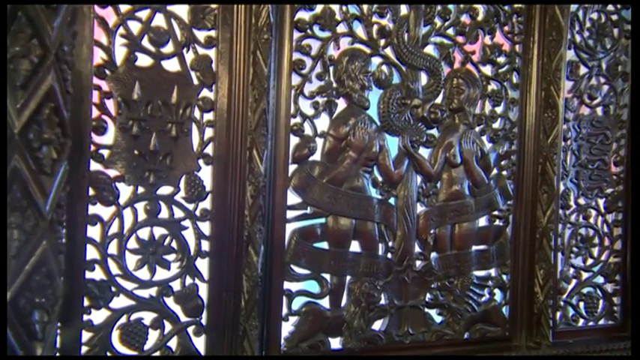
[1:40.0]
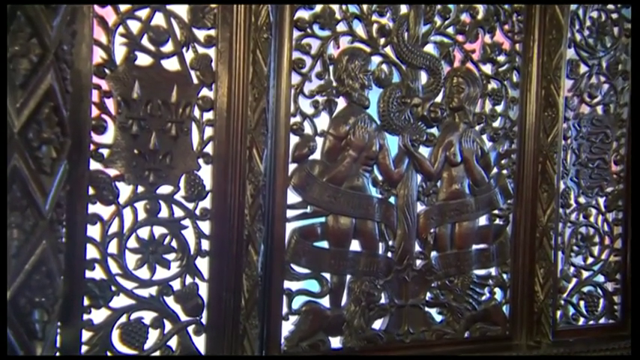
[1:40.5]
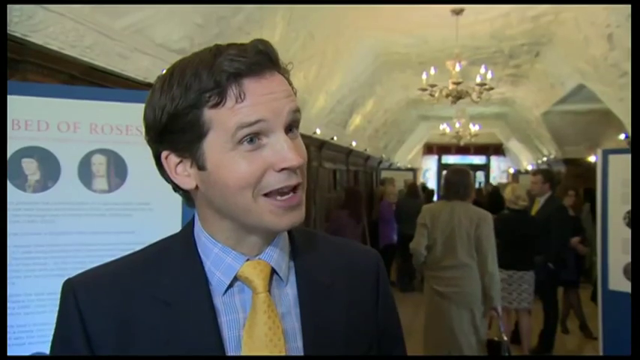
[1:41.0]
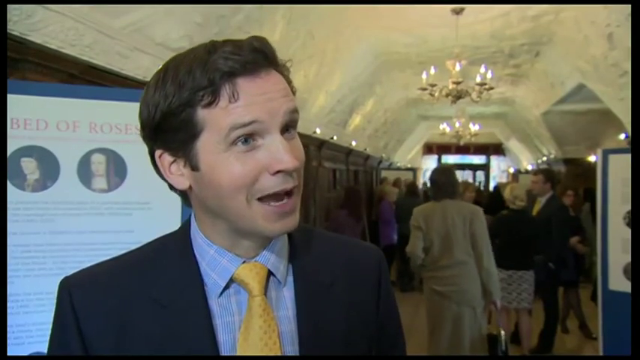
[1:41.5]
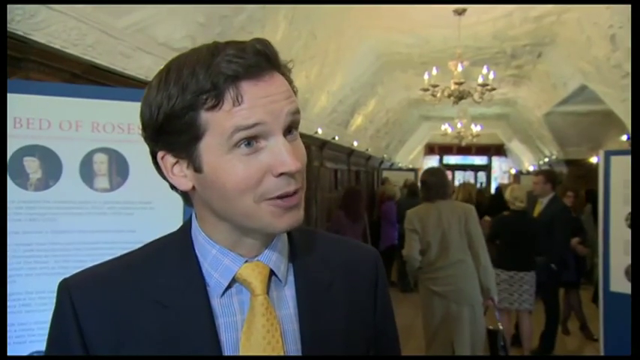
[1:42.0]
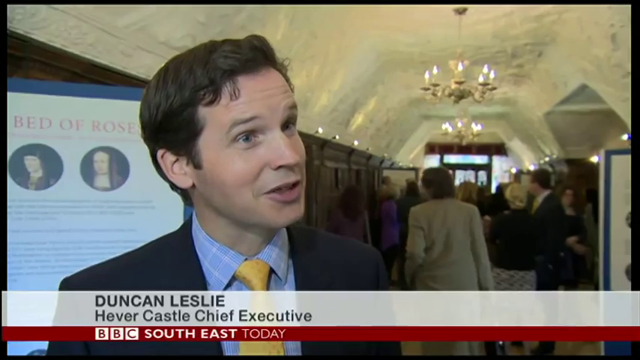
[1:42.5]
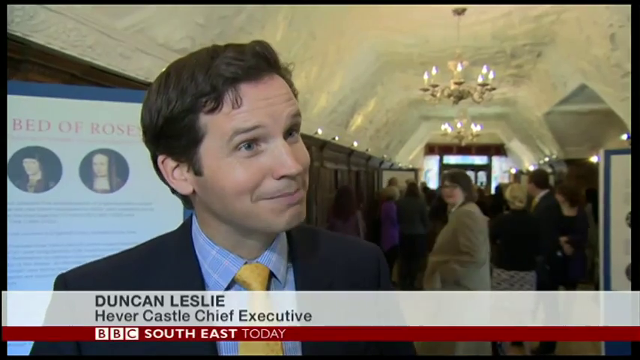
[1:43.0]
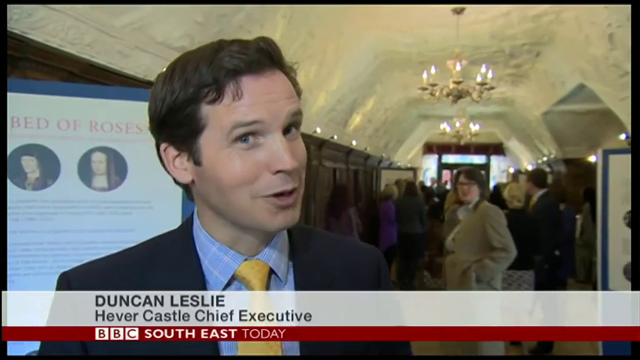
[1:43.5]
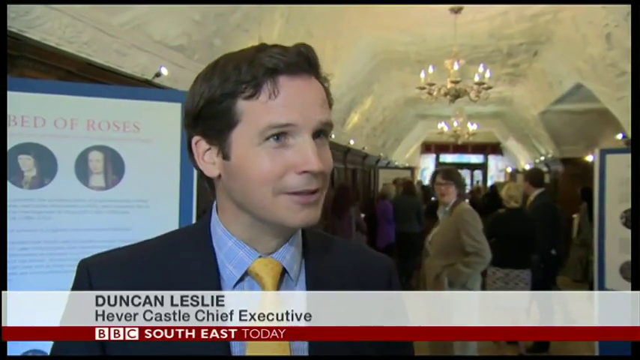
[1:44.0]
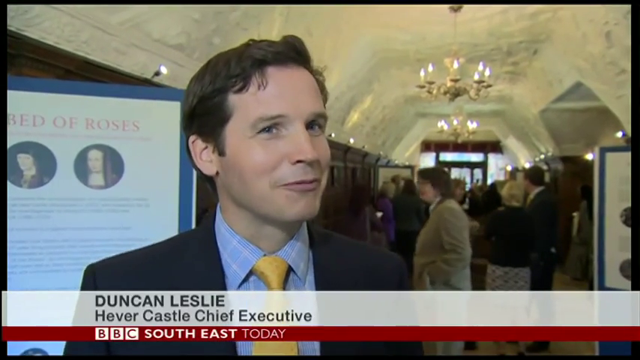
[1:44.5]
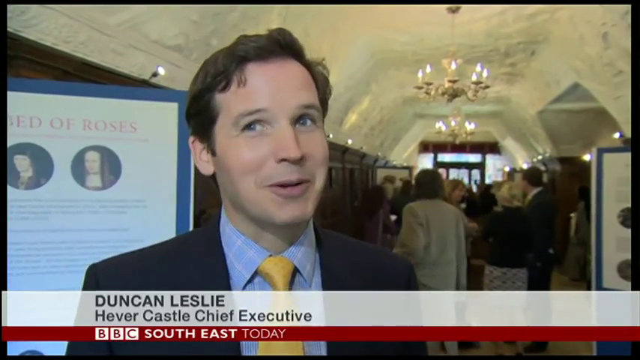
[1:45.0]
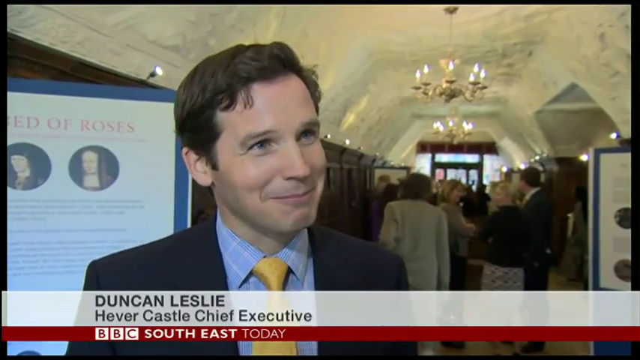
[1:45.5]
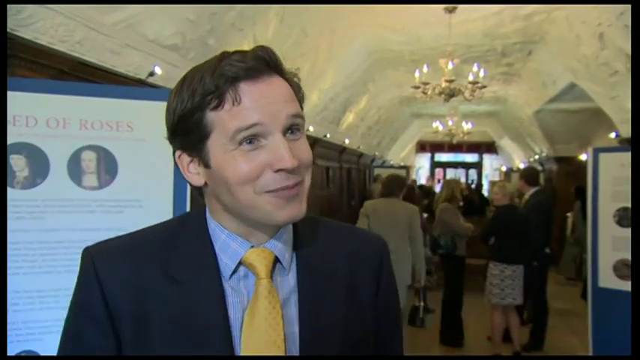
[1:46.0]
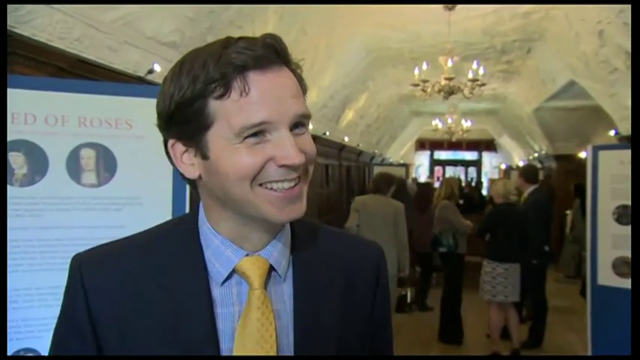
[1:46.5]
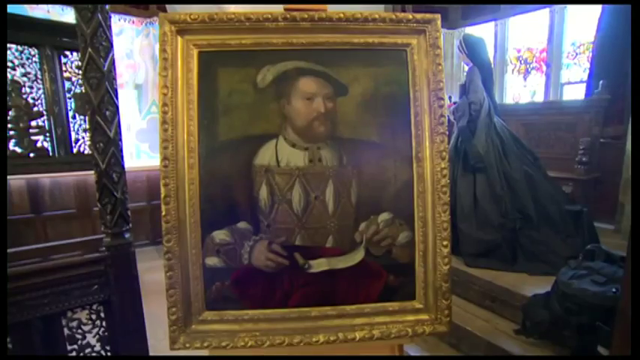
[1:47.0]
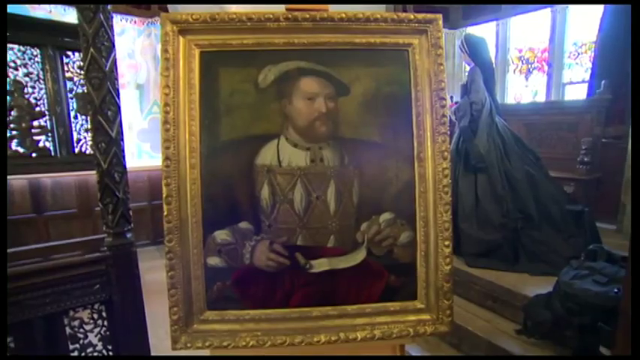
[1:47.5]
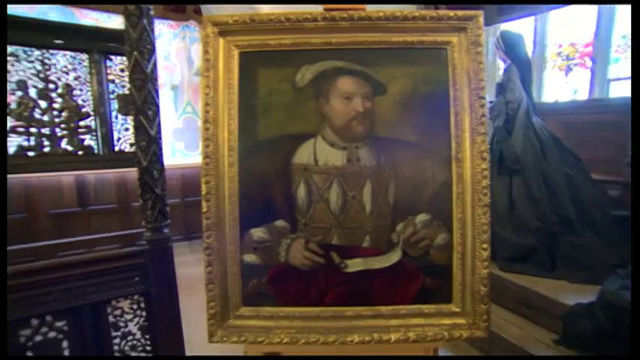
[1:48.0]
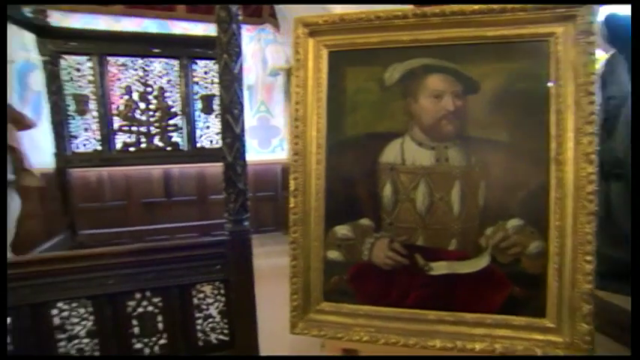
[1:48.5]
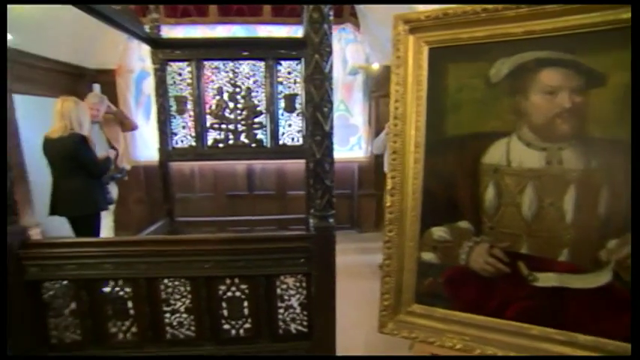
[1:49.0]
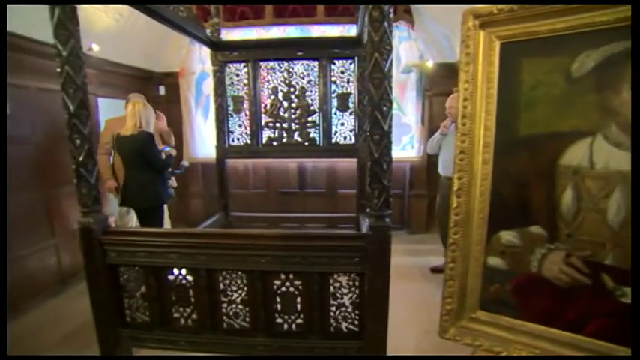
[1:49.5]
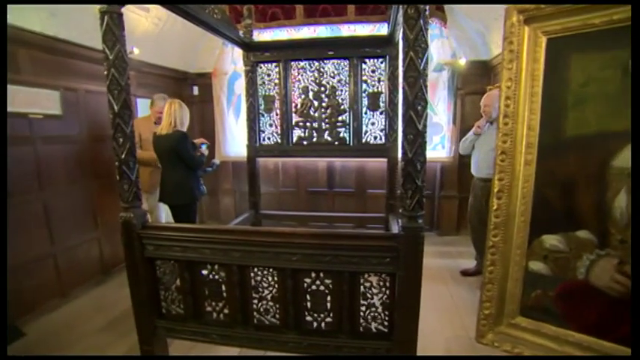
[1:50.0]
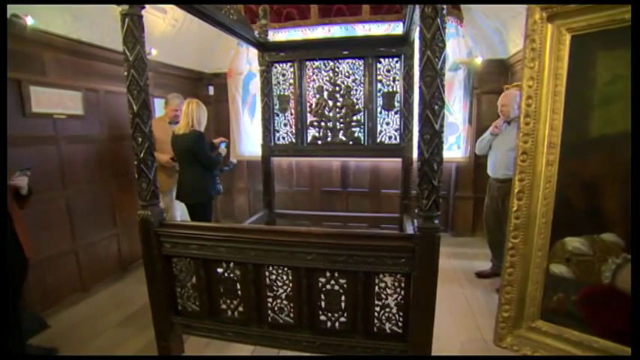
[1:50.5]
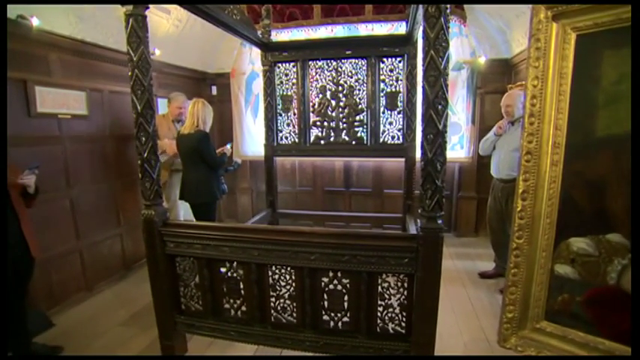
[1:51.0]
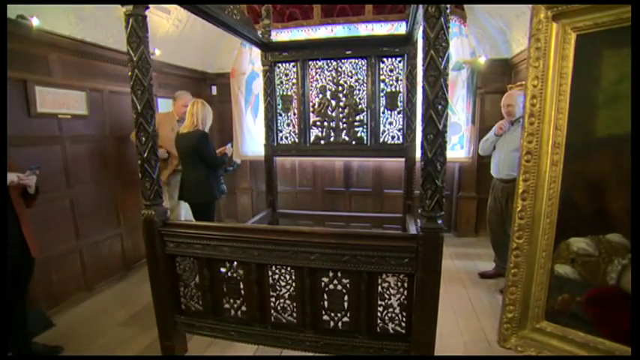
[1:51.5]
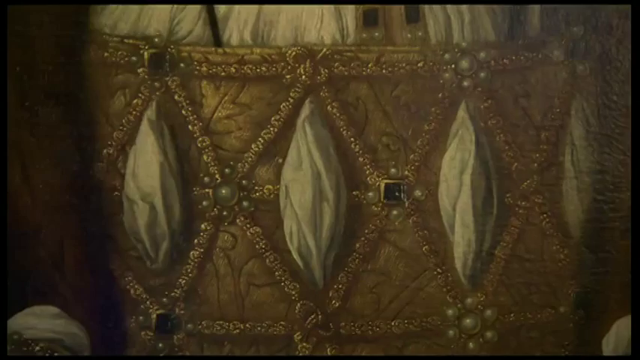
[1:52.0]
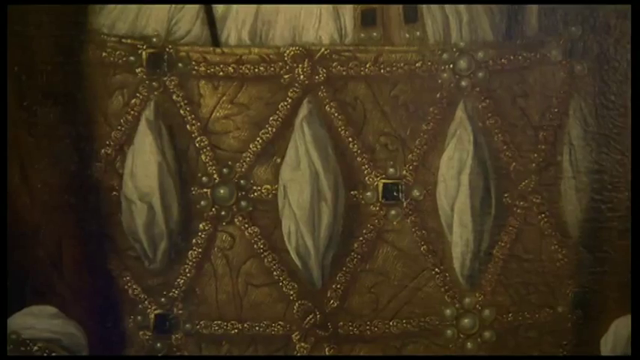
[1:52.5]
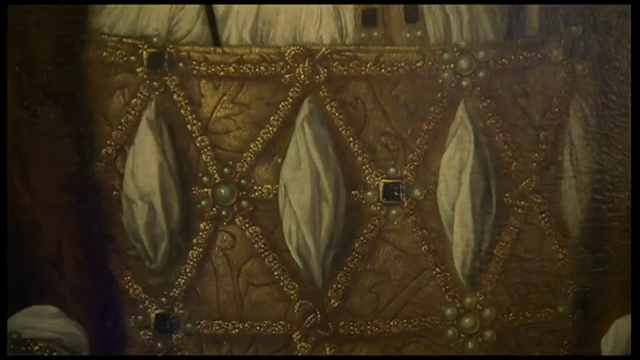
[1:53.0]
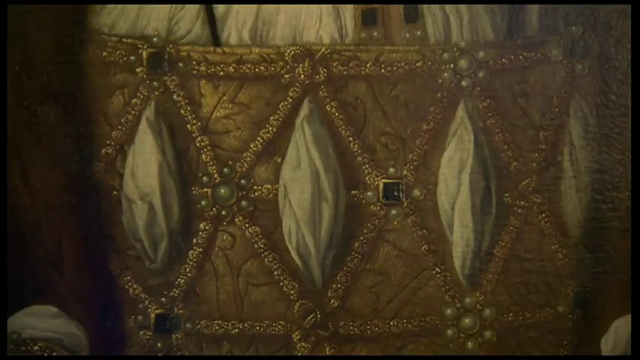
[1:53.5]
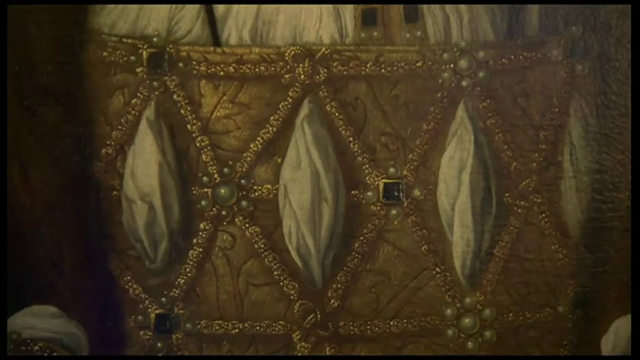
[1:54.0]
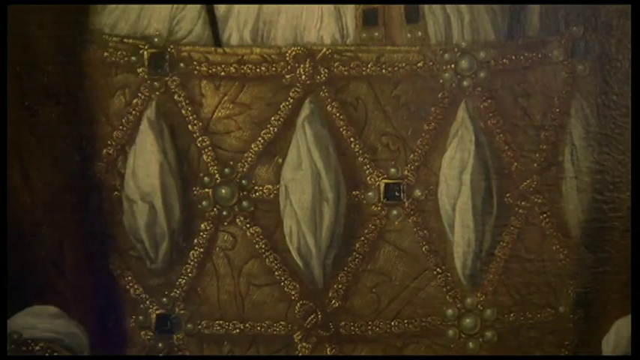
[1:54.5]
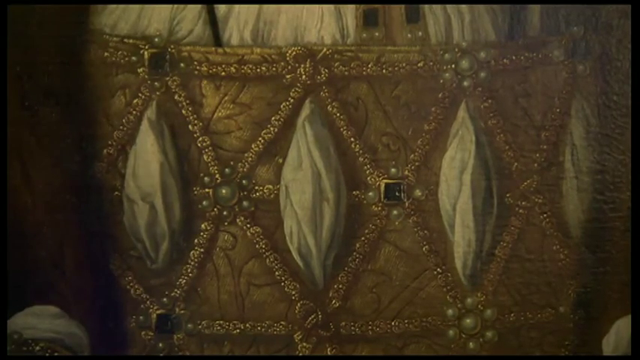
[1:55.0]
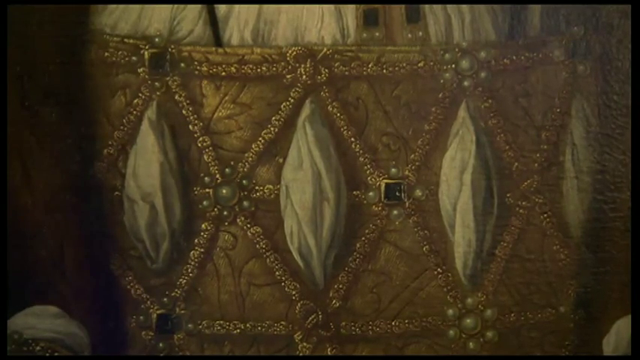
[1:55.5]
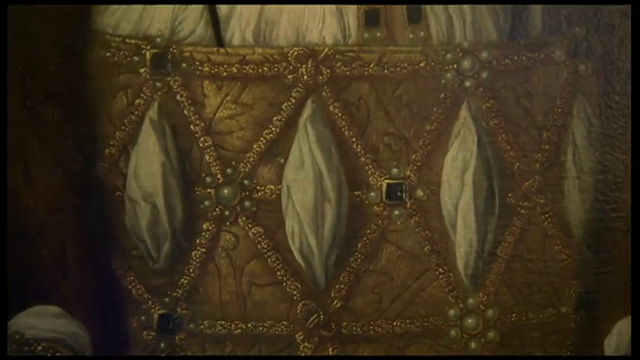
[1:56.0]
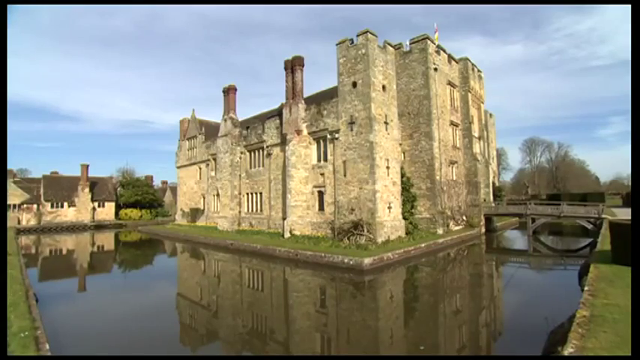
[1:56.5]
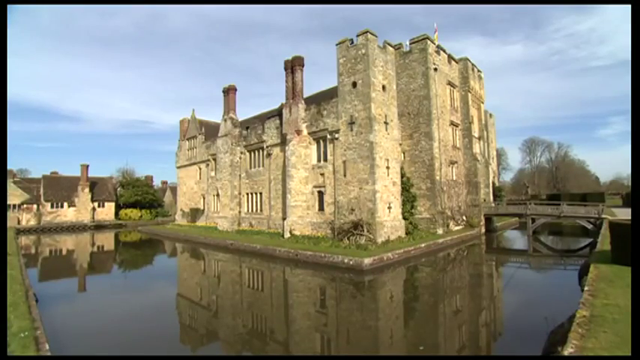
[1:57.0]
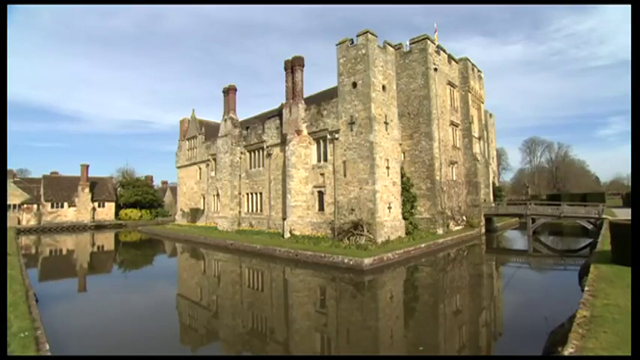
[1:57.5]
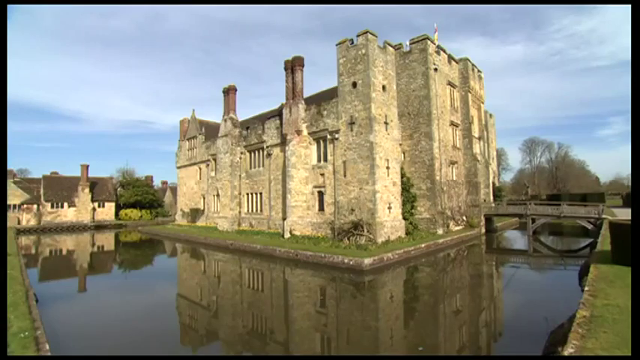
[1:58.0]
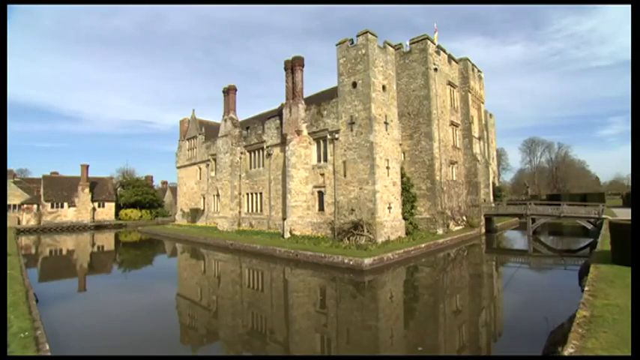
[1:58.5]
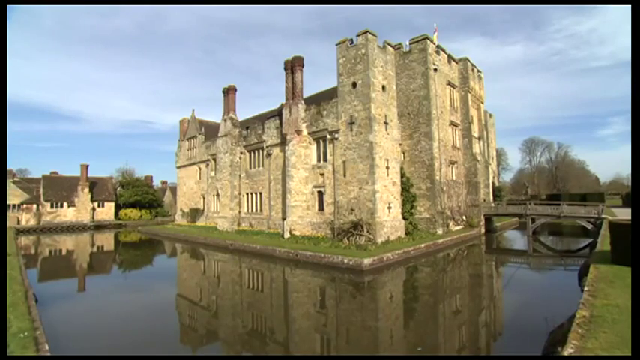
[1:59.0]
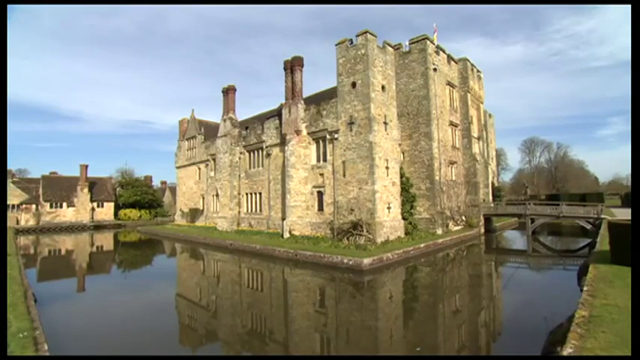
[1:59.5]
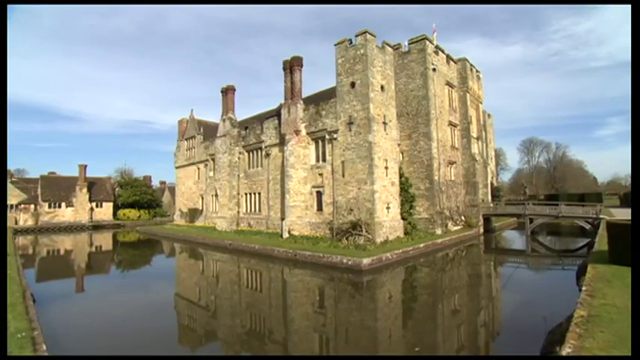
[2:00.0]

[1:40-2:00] A lot of people are visiting the place, which seems to be very cultural. A woman shown is the chief executive of mover castle, and the news is broadcast by the BBC. The dresses have a lot of diamonds. The building is right beside the lake, and the water is visible.